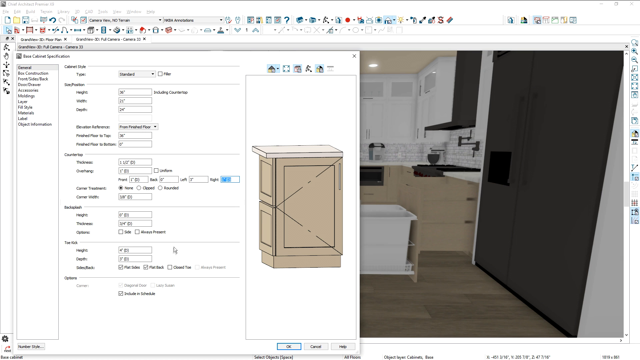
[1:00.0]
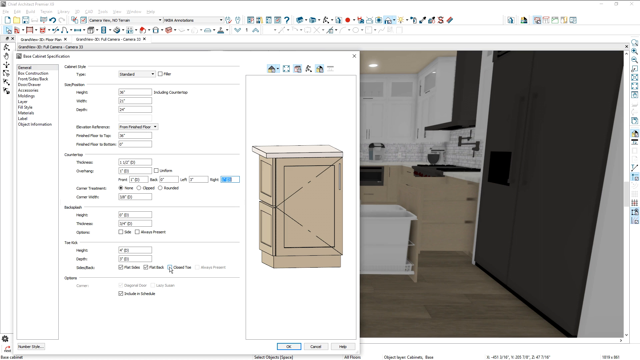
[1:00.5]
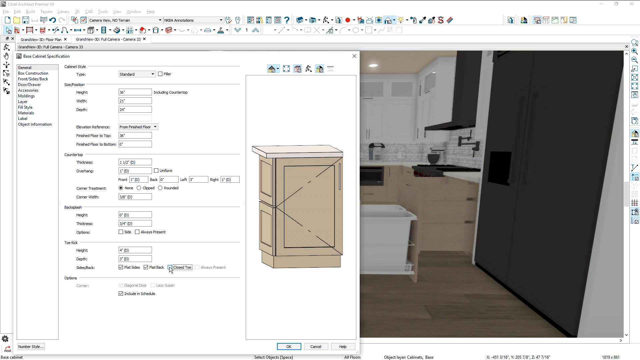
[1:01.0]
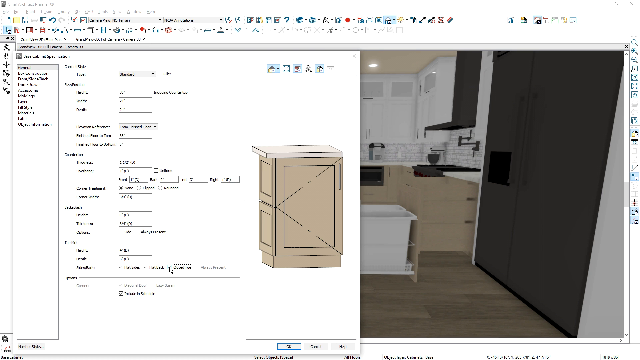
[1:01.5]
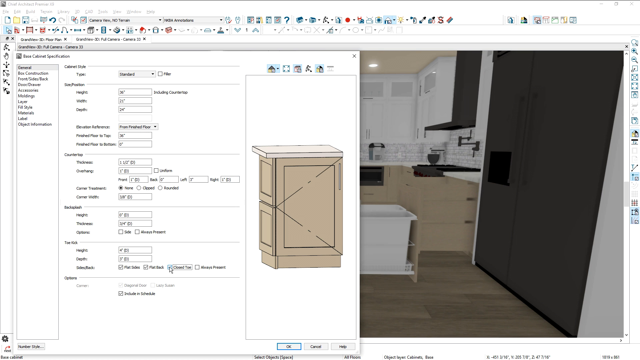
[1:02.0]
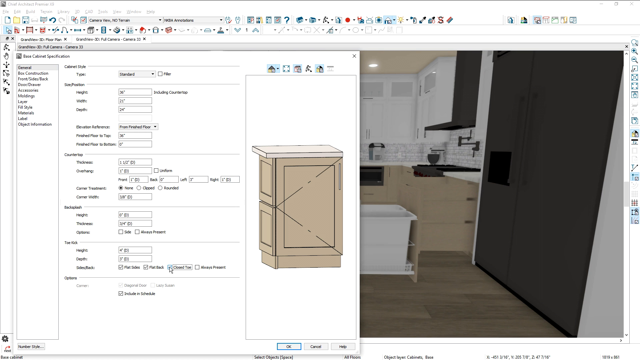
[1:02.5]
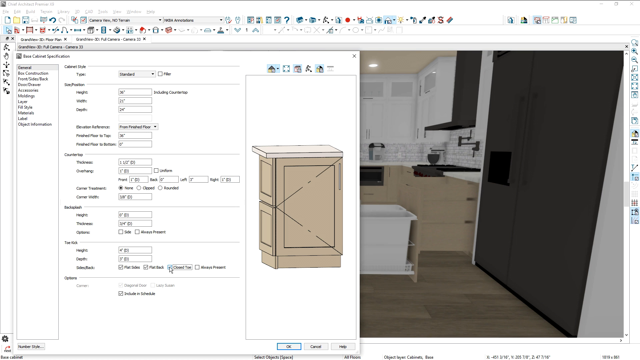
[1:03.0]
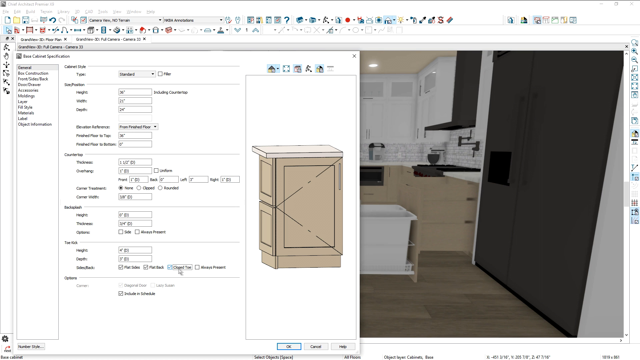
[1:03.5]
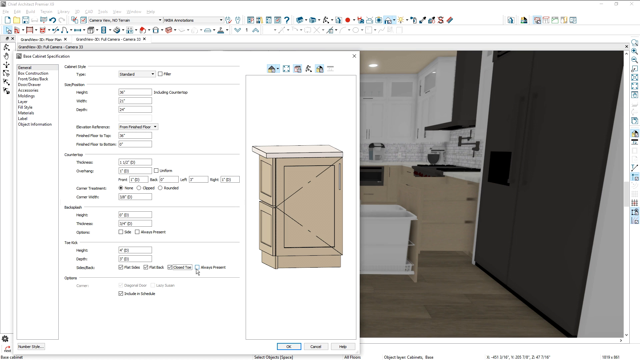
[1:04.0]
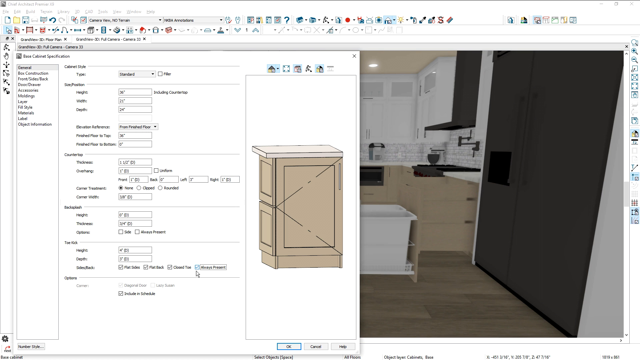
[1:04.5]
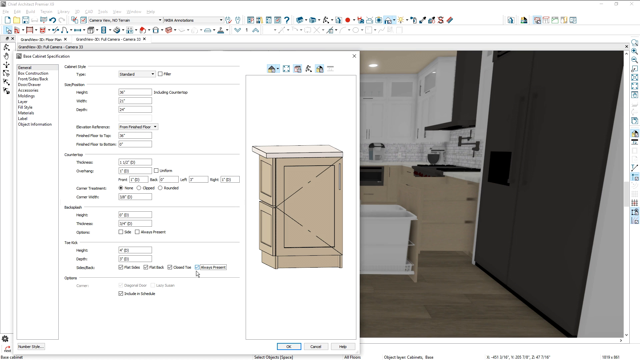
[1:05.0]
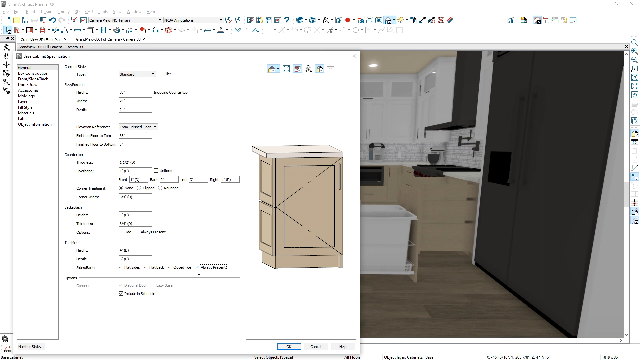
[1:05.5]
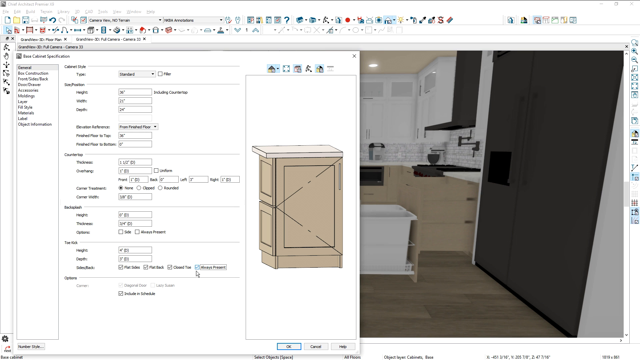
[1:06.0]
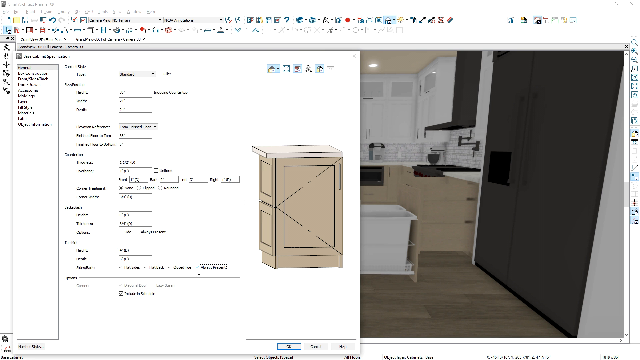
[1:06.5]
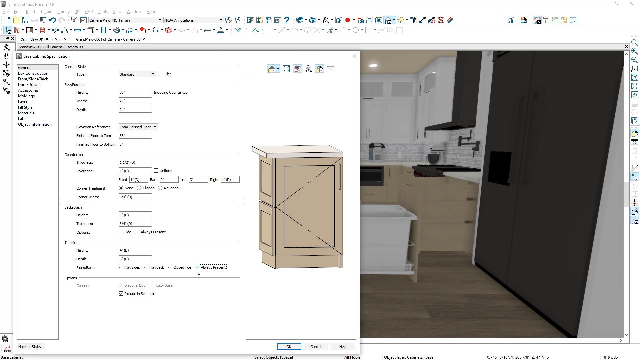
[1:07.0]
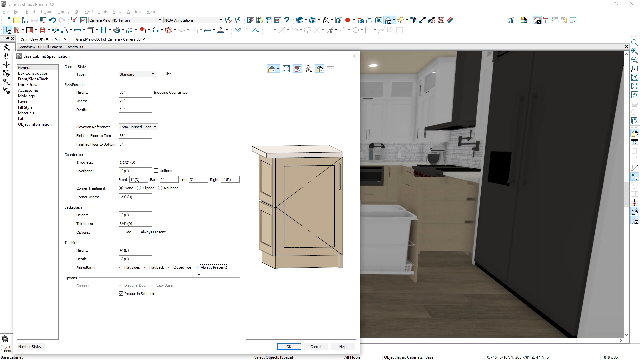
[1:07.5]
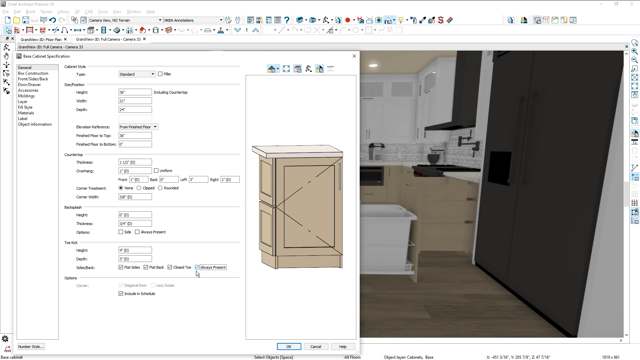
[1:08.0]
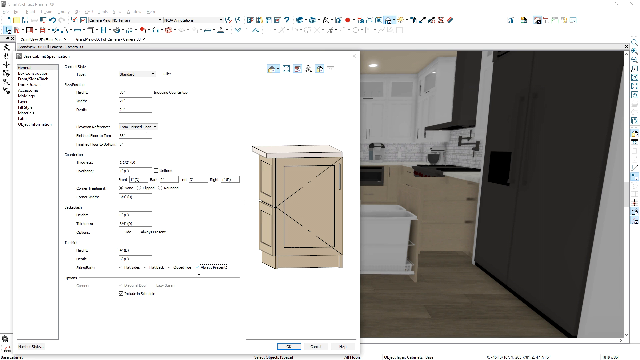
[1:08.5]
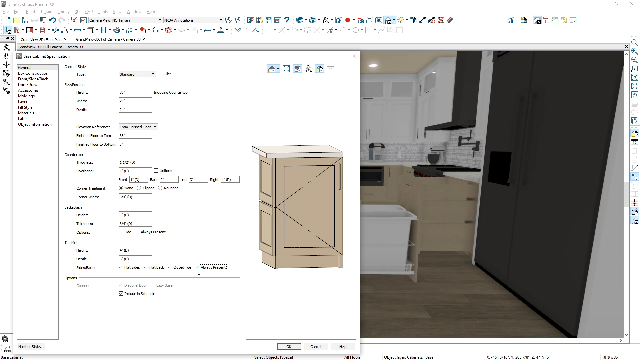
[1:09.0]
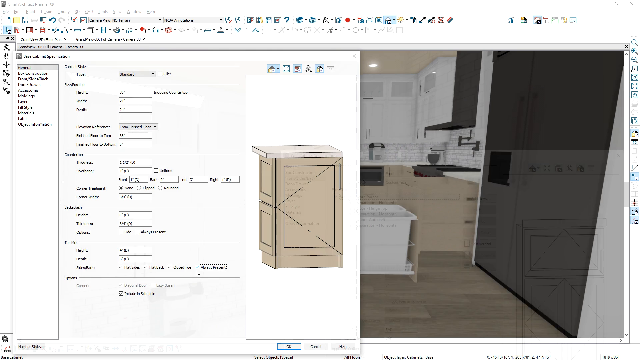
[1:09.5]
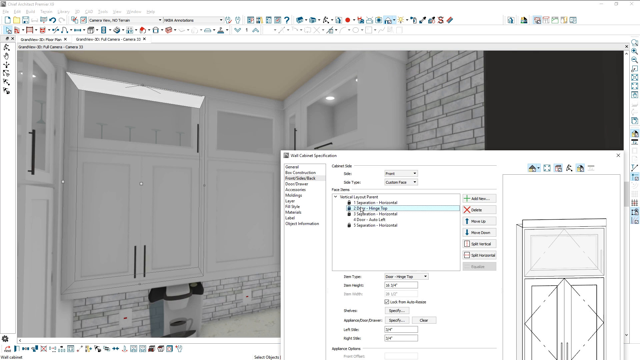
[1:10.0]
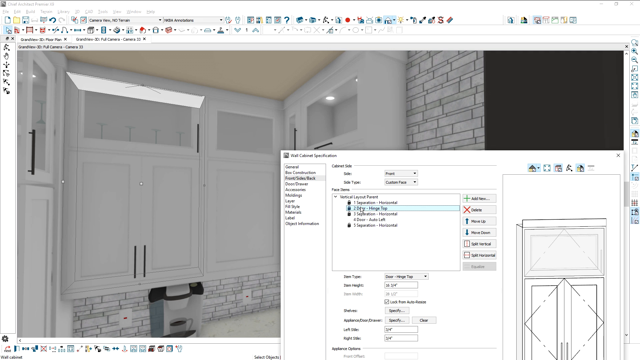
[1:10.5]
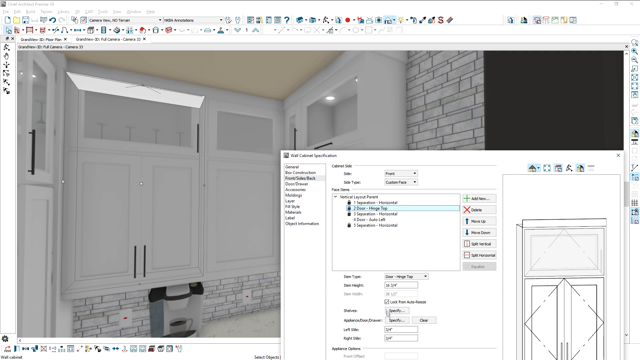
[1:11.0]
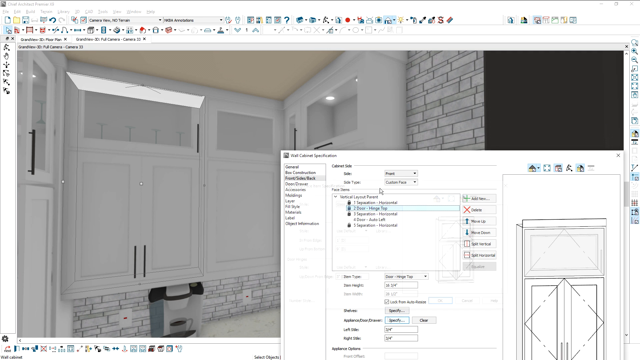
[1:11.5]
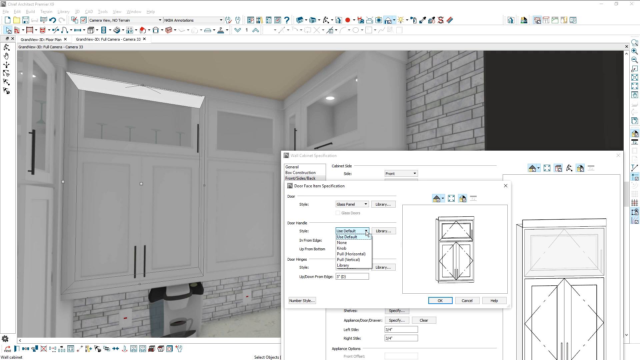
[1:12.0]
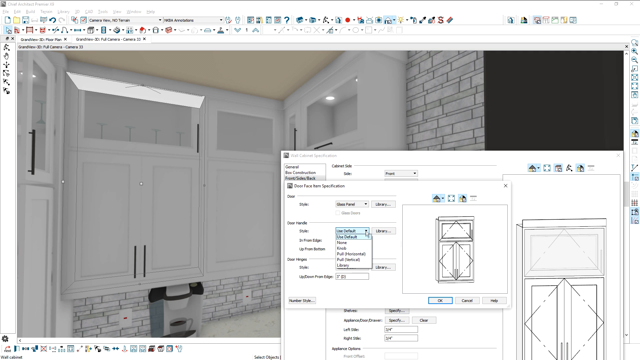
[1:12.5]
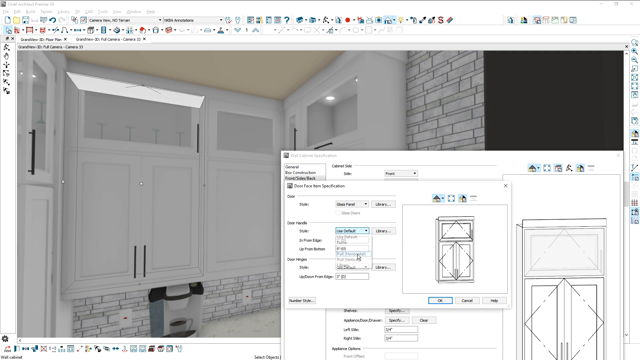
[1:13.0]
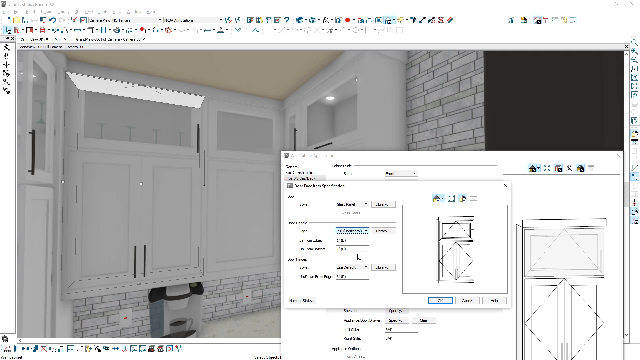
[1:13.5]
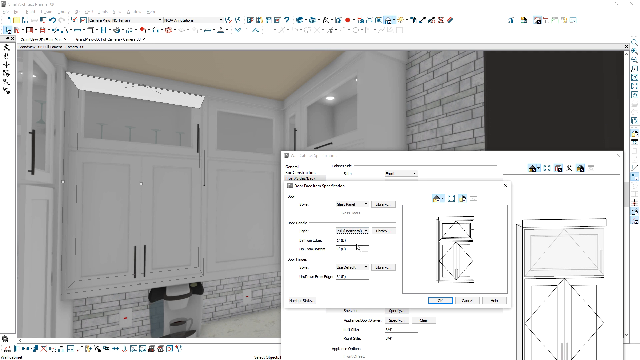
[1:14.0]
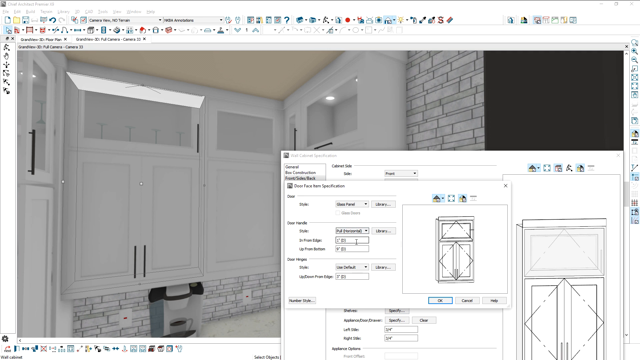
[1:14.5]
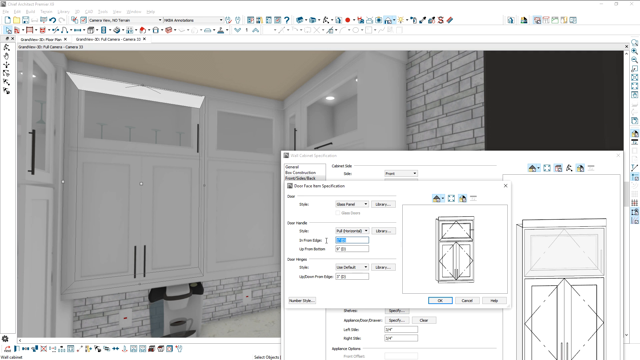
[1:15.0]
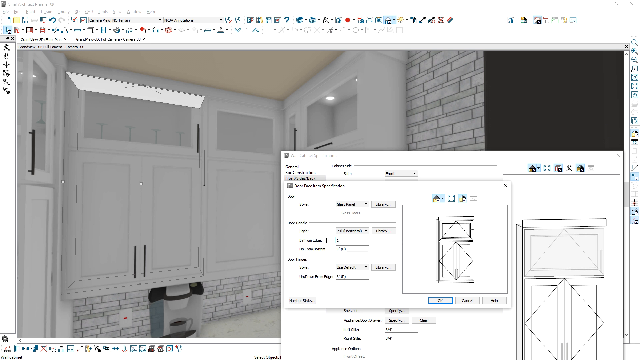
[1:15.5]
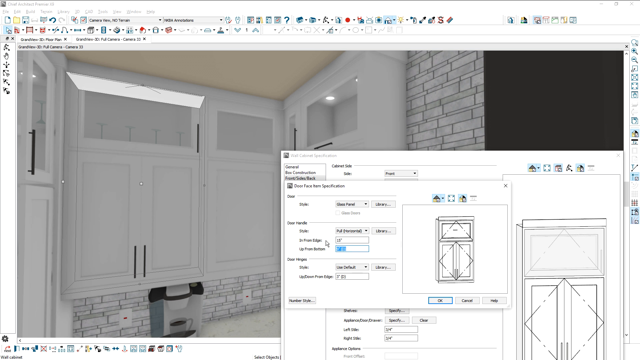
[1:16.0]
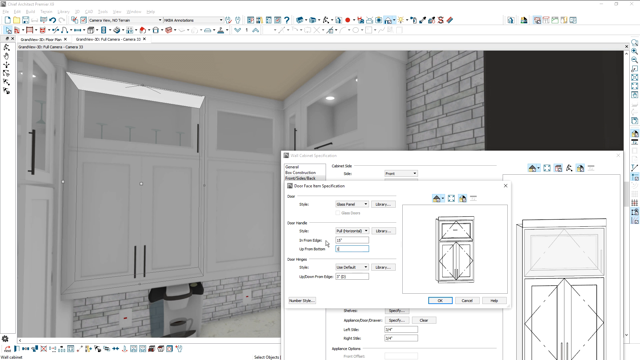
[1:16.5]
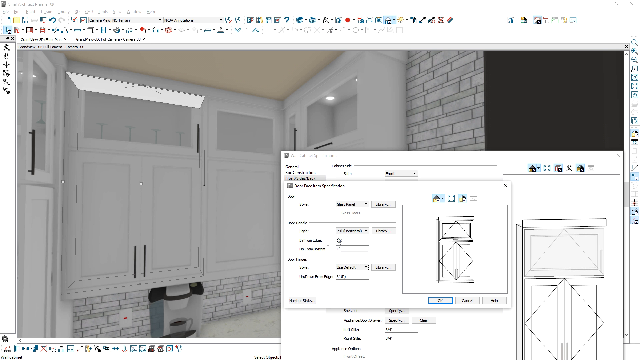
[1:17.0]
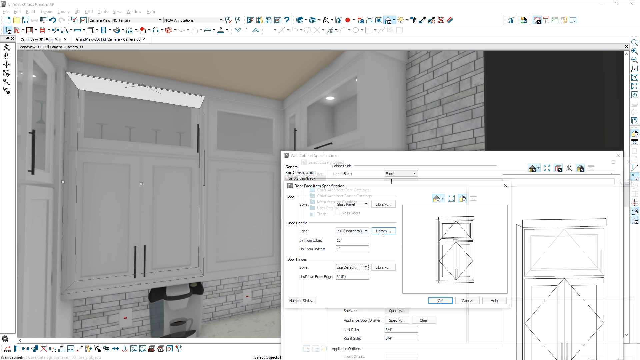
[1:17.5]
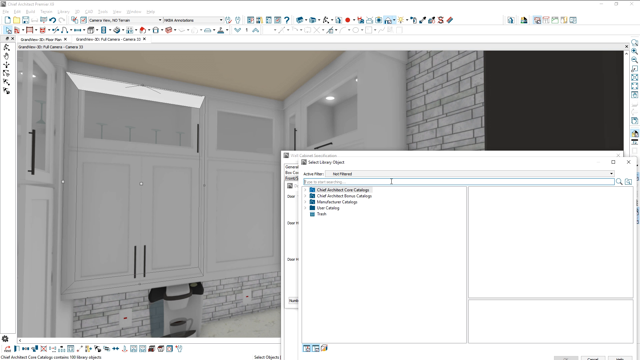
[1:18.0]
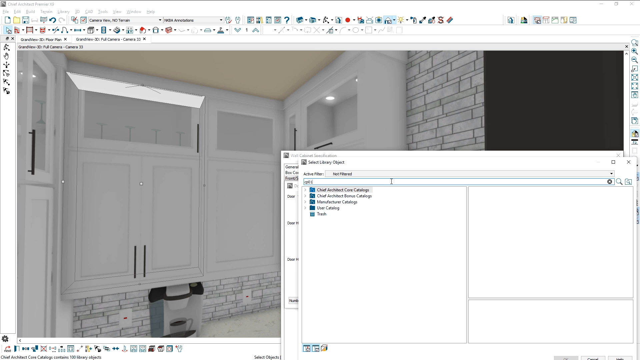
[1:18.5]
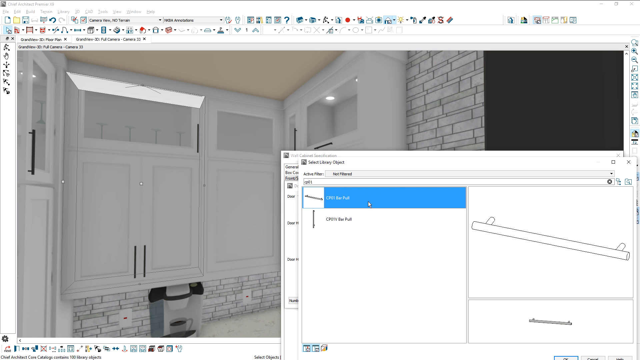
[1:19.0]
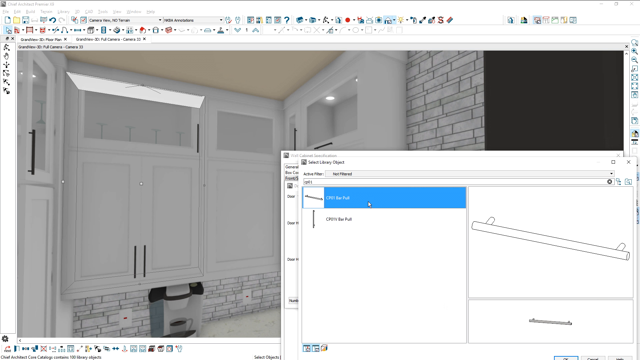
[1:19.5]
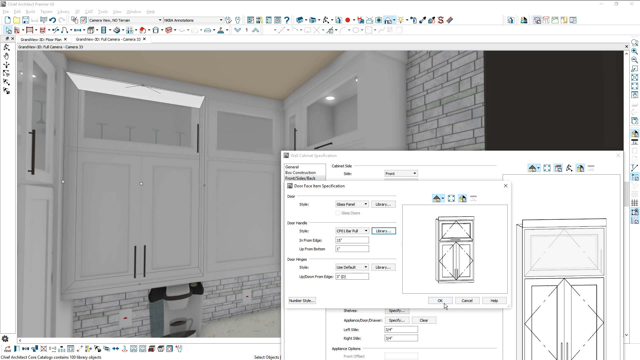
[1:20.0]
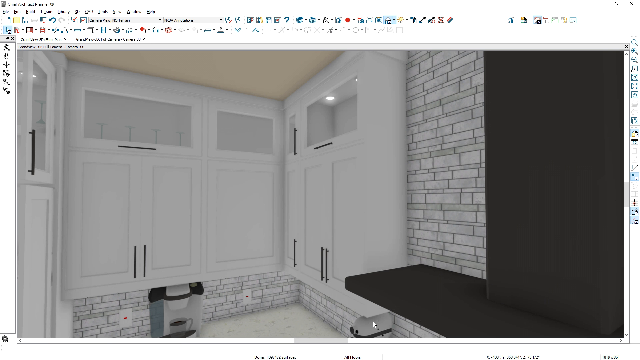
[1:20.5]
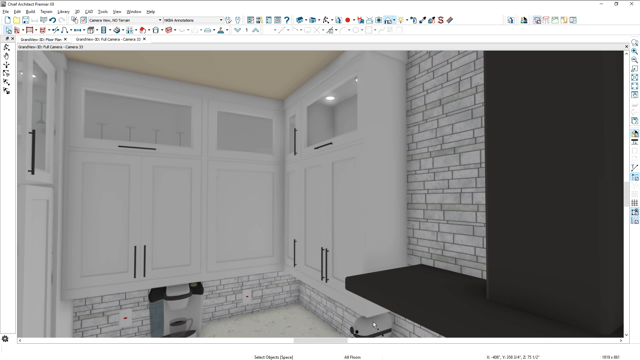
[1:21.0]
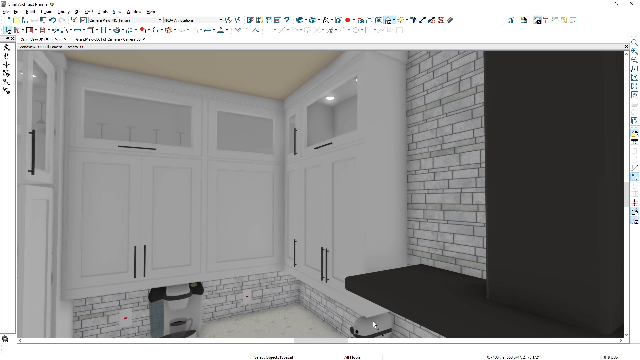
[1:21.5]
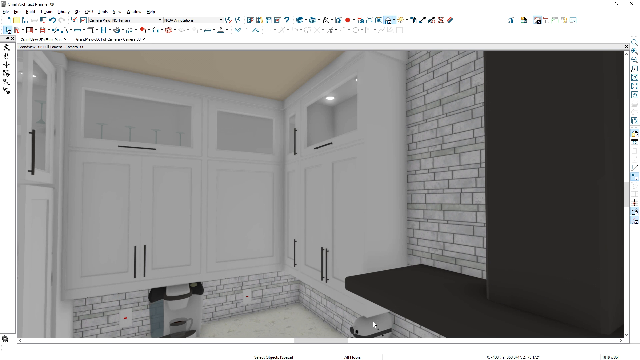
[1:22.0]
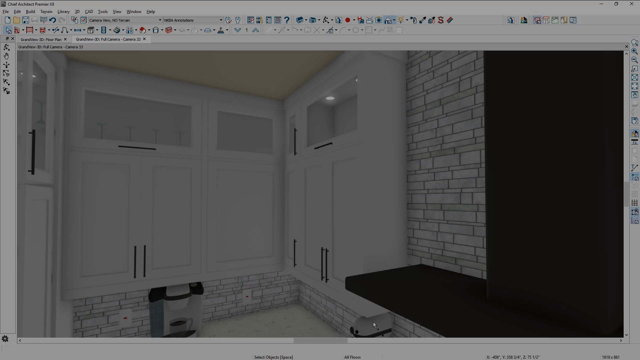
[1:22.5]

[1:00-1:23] What appear to be the architect's last touches on the house design are shown, with items being edited, removed and deleted. The kitchen is now all white, instead of the black and white seen earlier, as the final product.